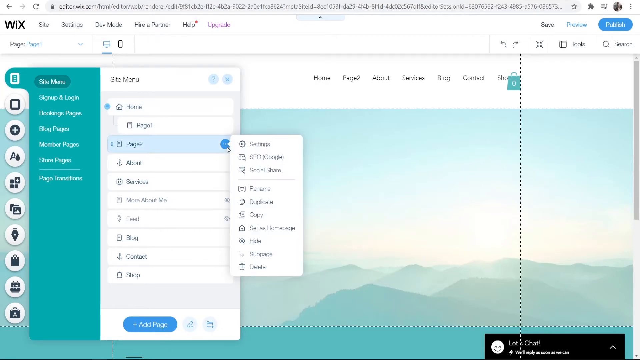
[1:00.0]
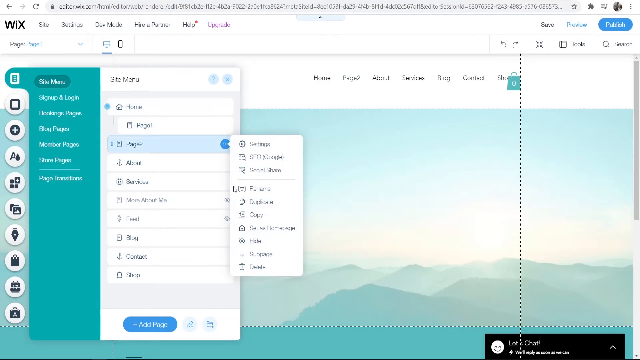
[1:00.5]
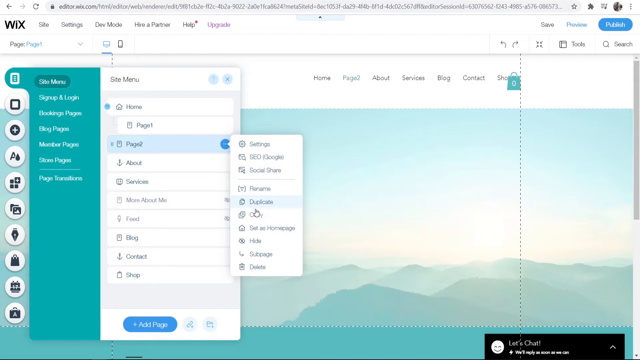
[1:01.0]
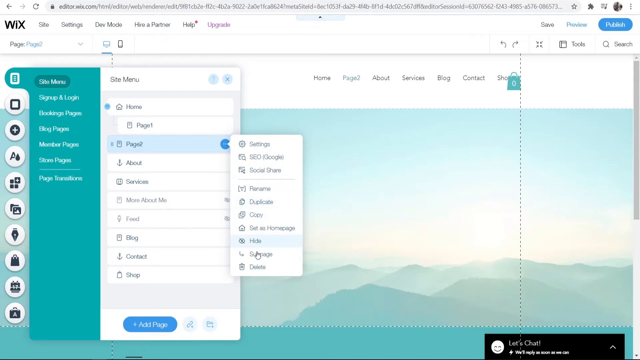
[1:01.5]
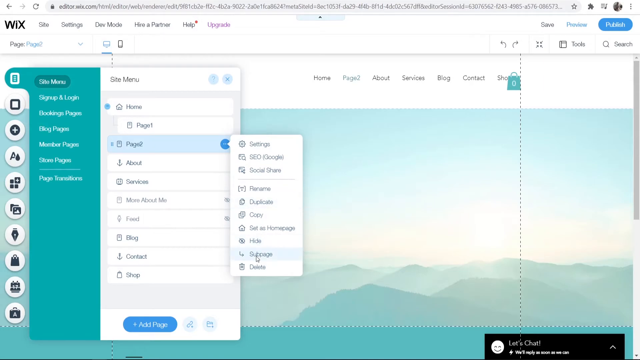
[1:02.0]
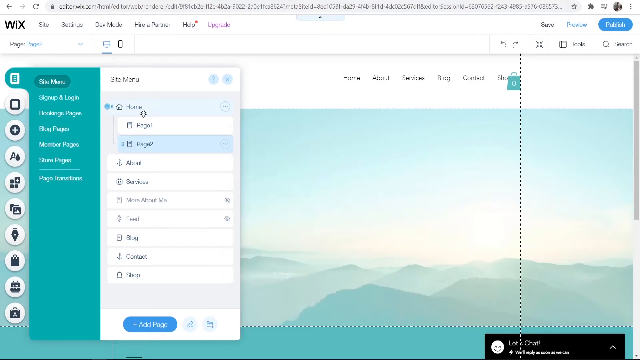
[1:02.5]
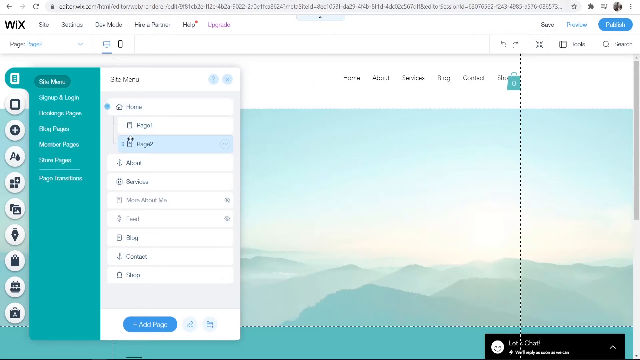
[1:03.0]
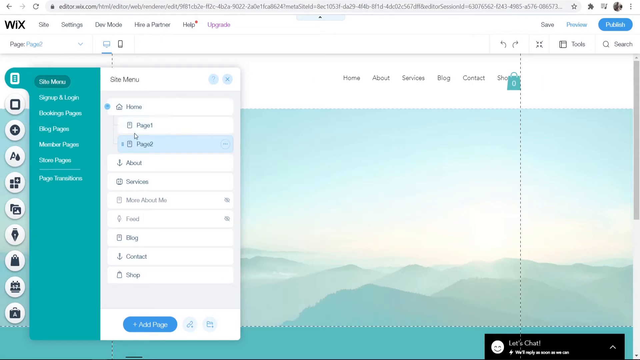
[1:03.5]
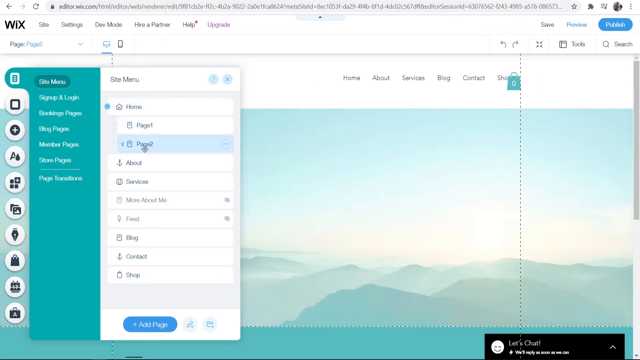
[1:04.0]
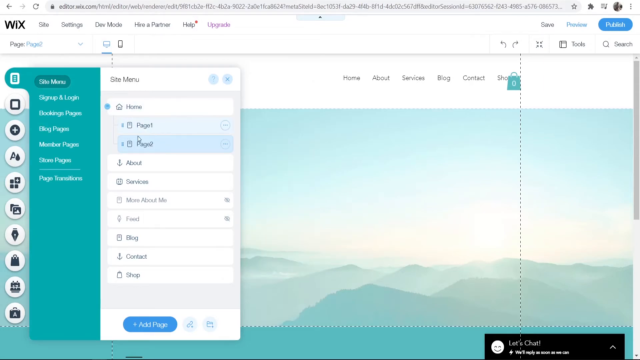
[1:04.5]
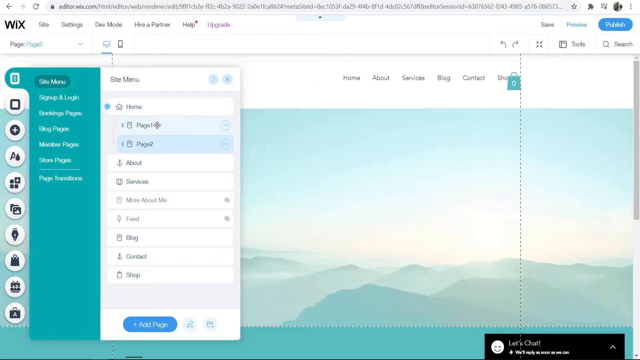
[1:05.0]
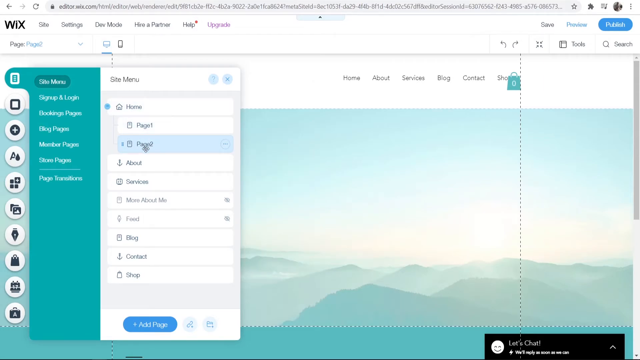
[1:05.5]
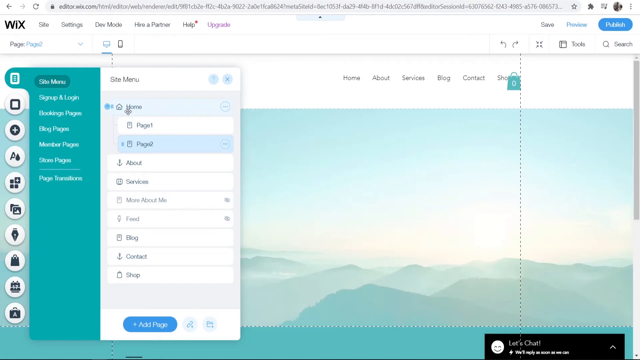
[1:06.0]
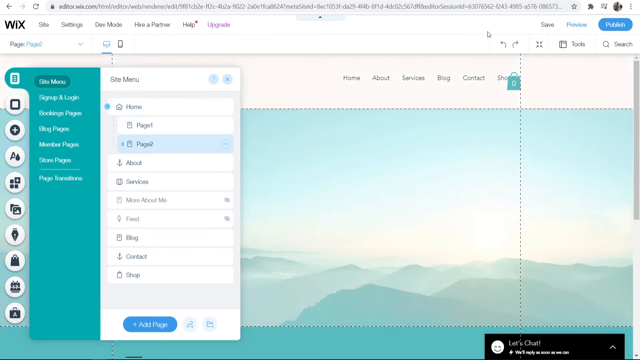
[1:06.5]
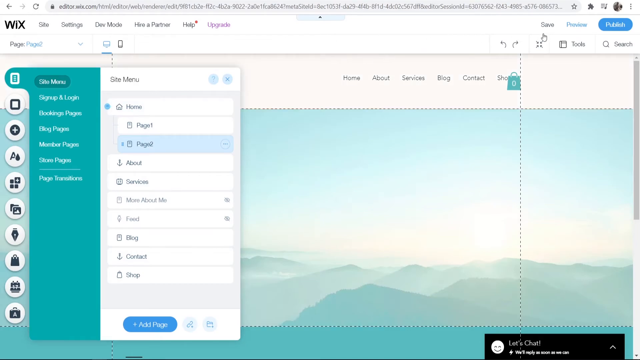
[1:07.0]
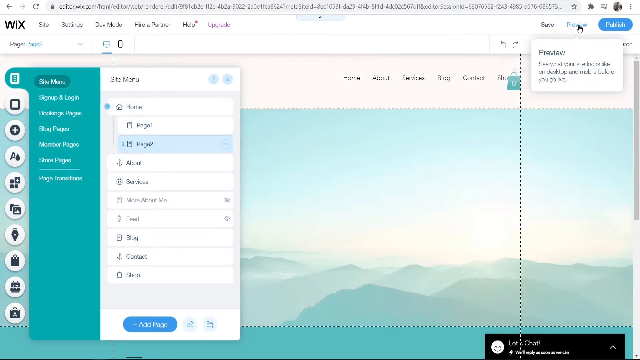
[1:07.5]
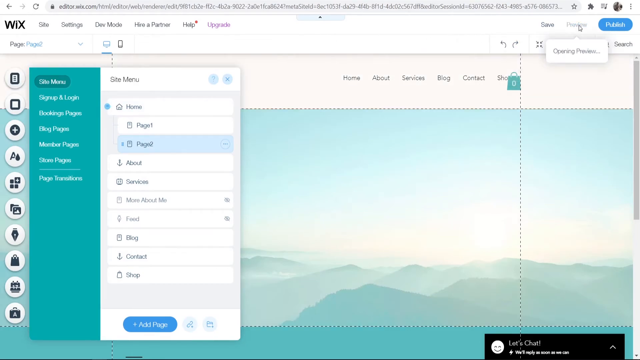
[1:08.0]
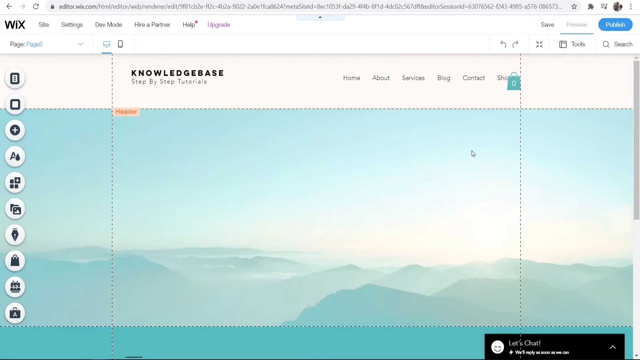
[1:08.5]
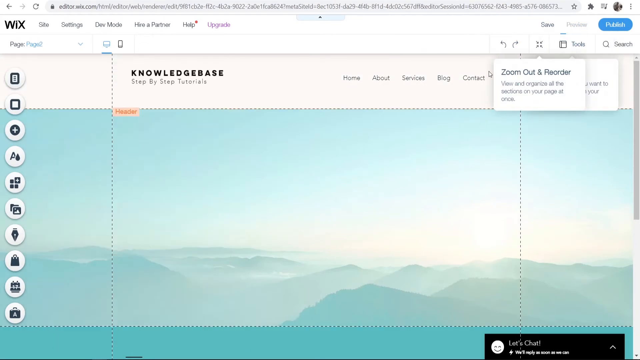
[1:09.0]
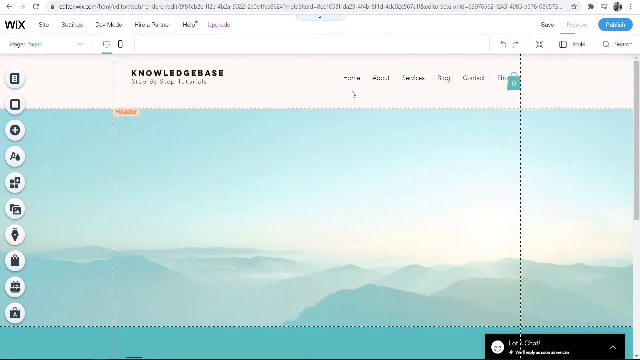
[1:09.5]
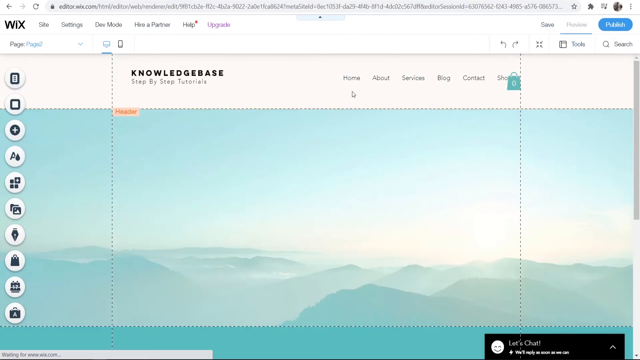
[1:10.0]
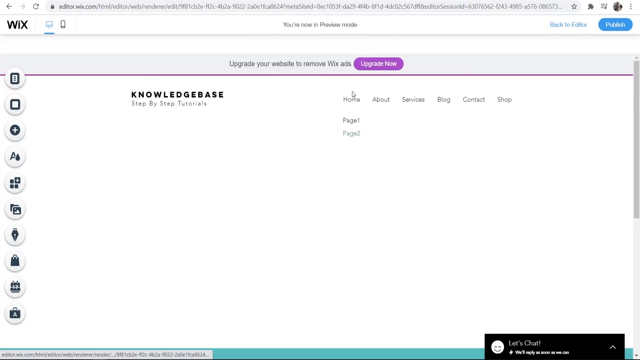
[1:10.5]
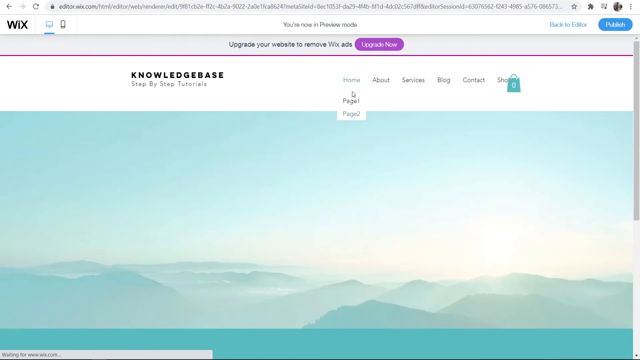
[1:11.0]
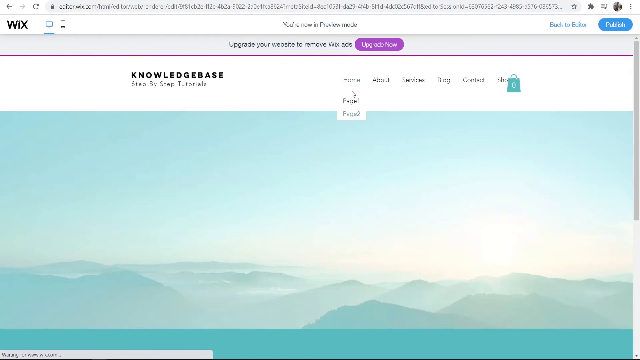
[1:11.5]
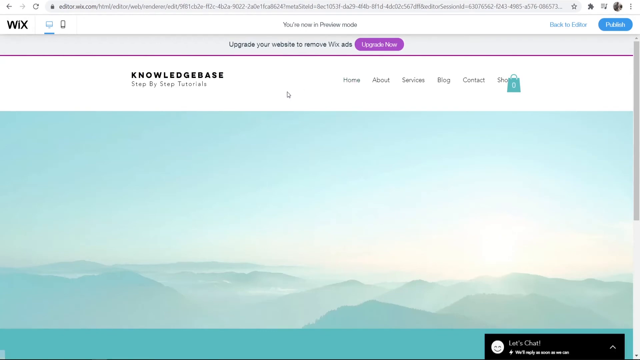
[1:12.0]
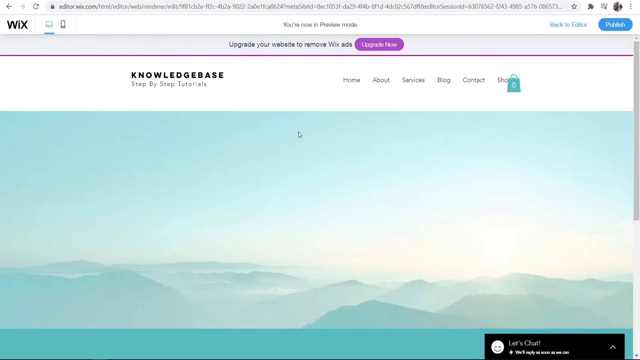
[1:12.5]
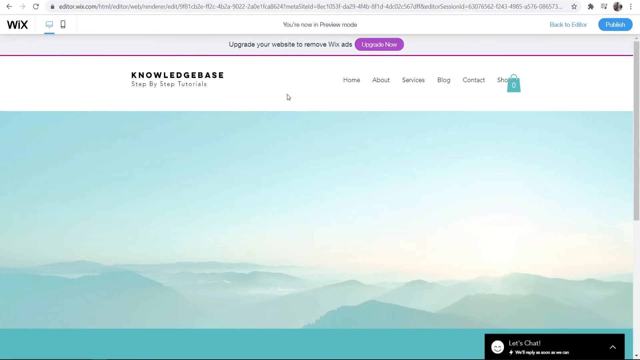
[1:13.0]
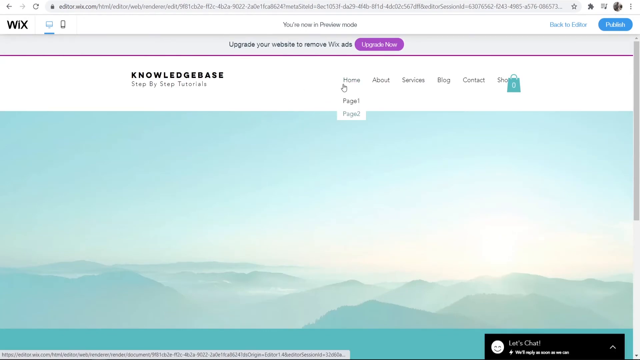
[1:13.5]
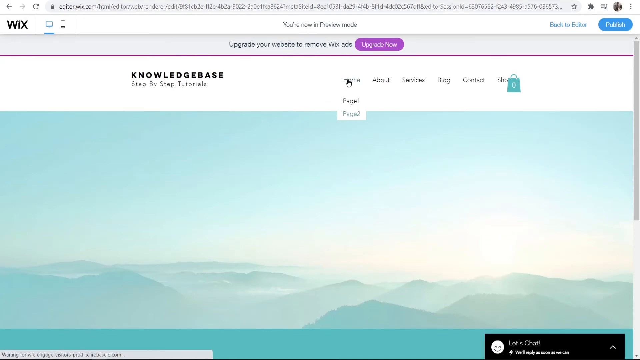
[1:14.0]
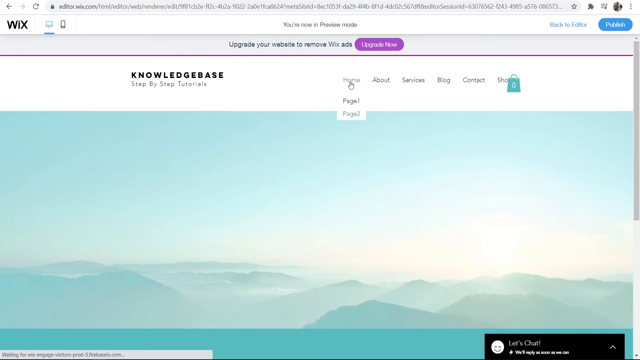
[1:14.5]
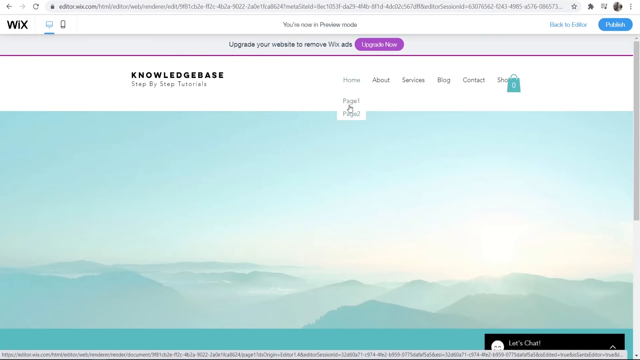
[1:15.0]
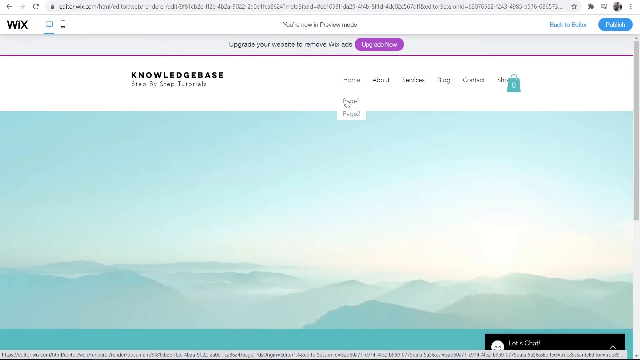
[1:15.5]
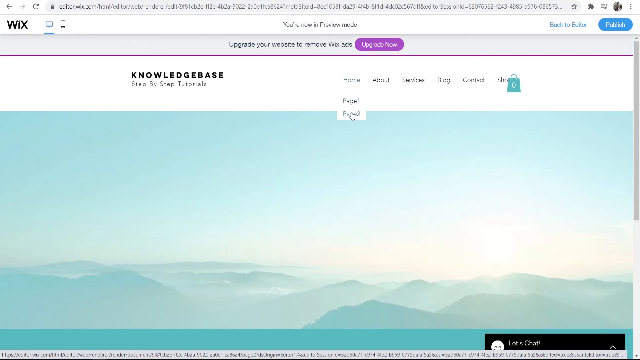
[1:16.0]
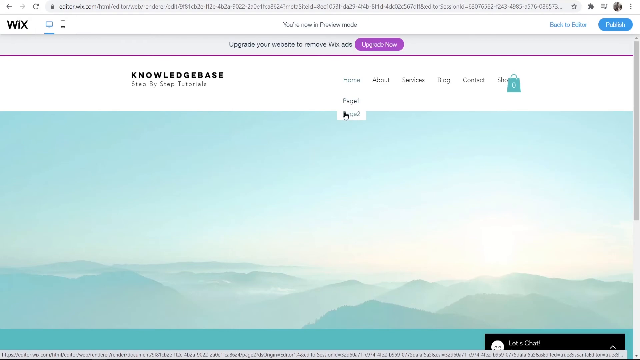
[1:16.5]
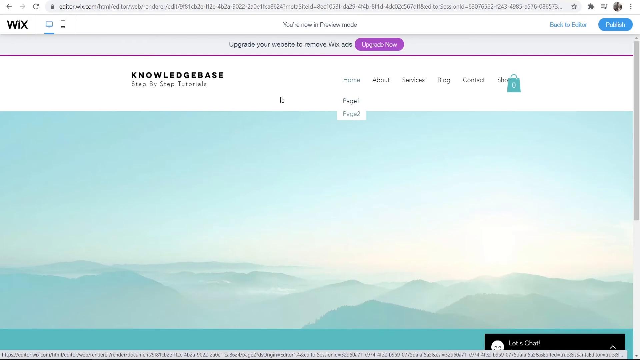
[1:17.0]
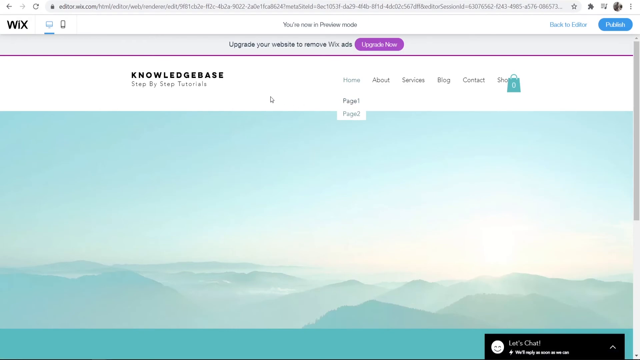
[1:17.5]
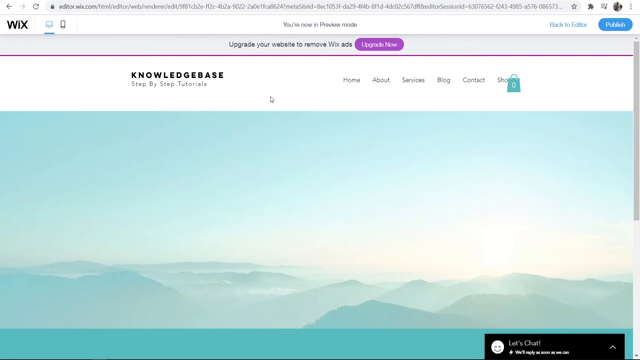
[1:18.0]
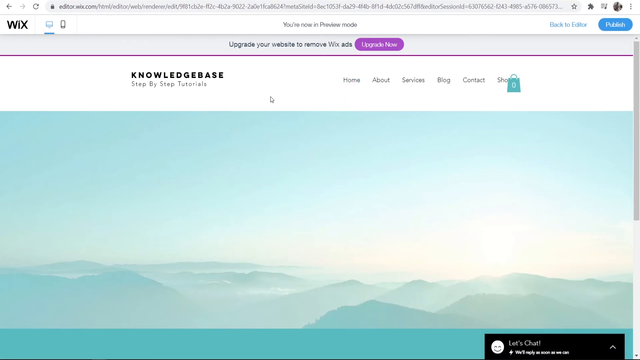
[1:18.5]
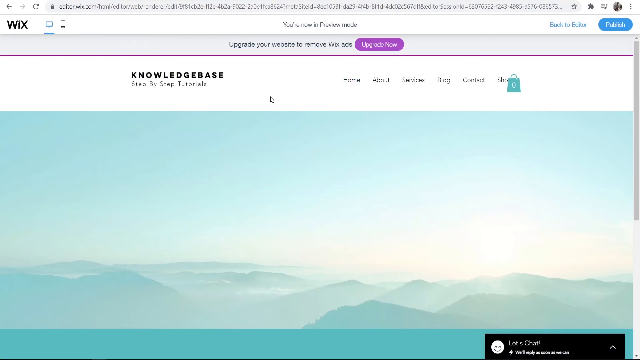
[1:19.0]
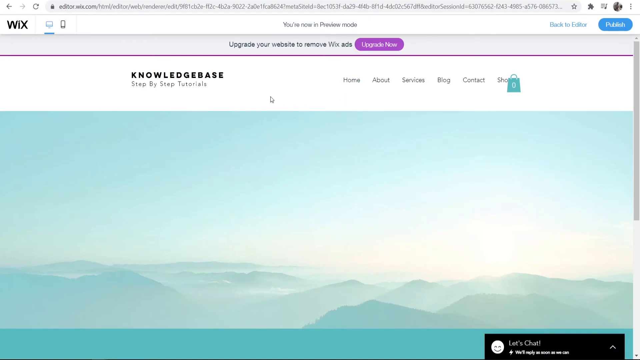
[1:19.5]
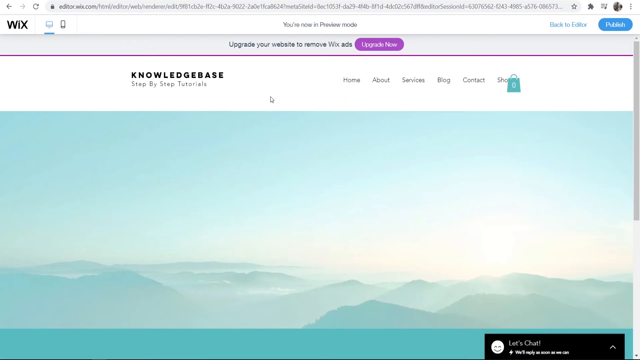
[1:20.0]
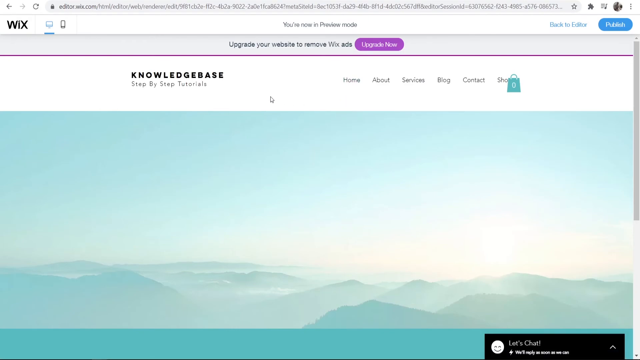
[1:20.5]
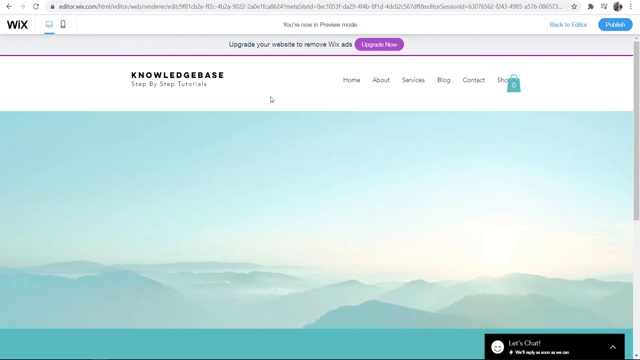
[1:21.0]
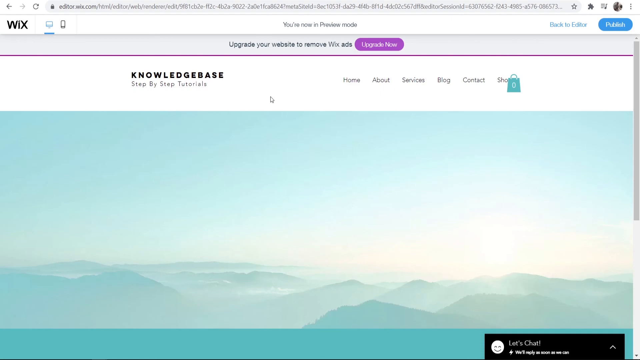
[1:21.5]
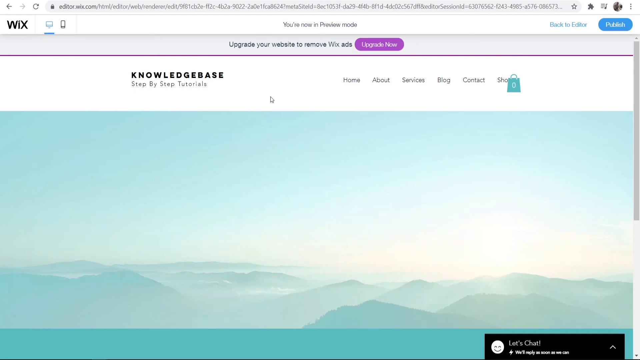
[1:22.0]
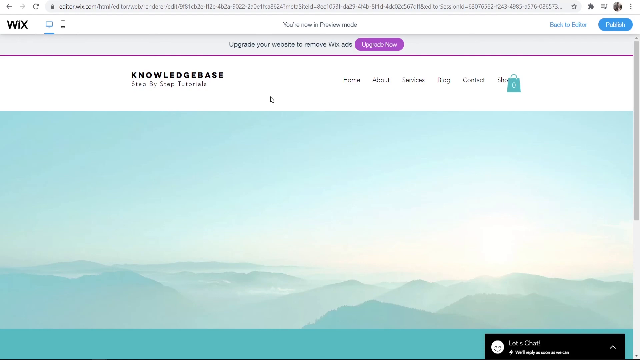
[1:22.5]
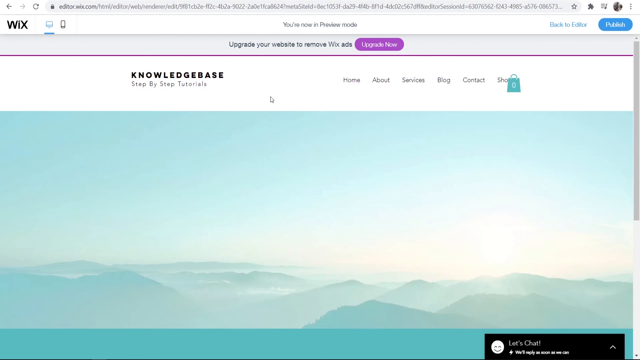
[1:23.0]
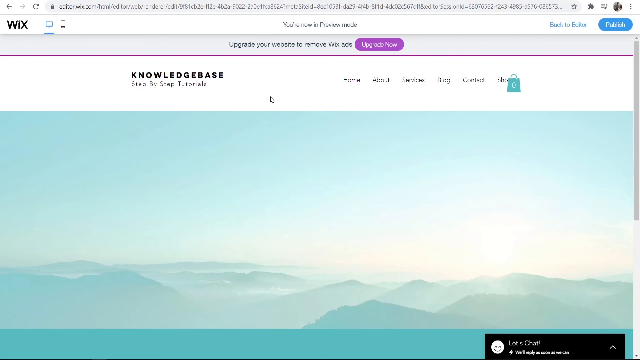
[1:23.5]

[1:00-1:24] On page 2, they click the three dots beside it and click subscribe. They then scroll up to previous, which leads back to a blank page showing just the mountaintops, and click home, where page 1 and page 2 drop down from the menu. The pages are still the same blank screen, with nothing loaded or added yet, almost as if it is a website with nothing on it, showing a blue background with some of the mountaintops, not all of them as on the homepage. In the top left corner is the word "knowledge". Page one and page two are shown to be blank pages with just the images on them.